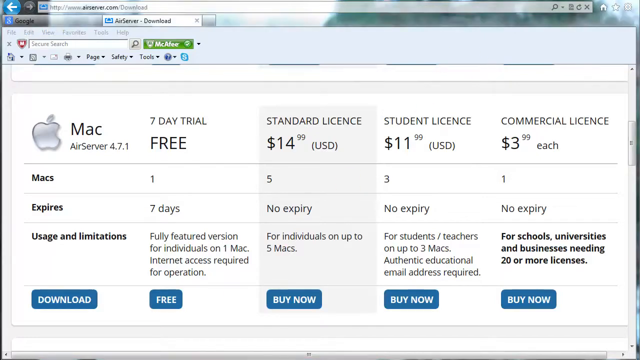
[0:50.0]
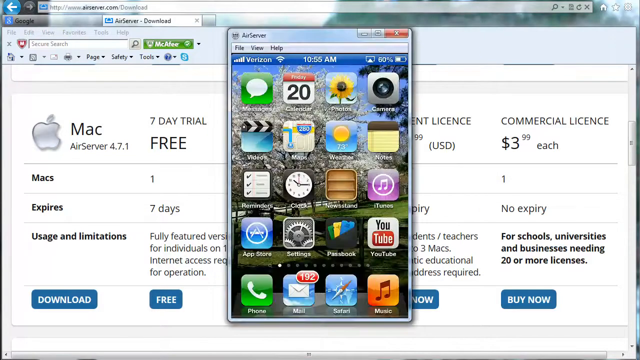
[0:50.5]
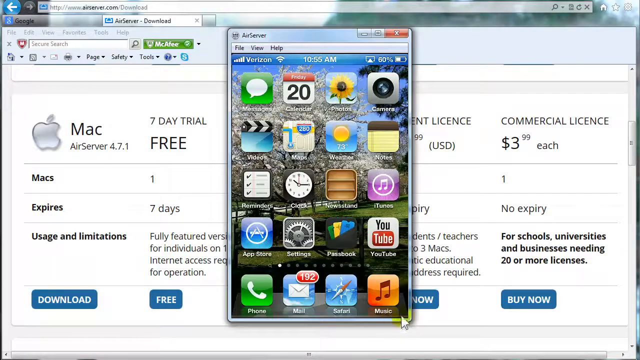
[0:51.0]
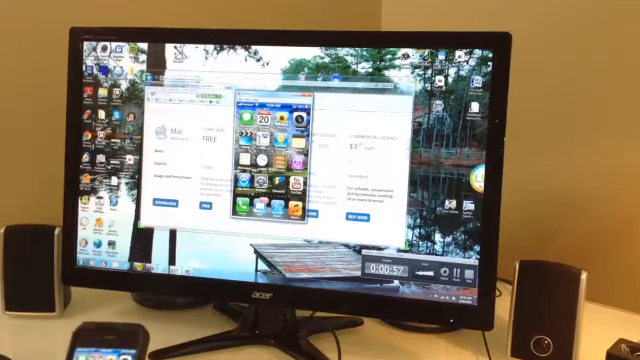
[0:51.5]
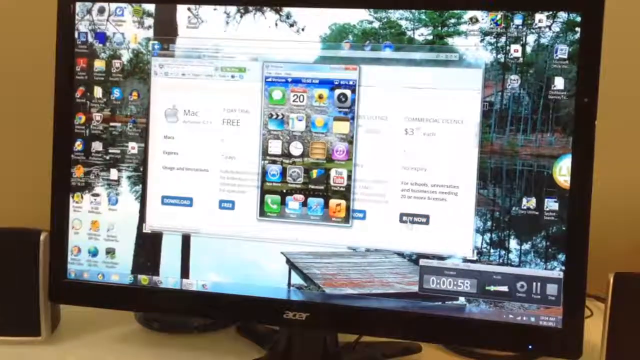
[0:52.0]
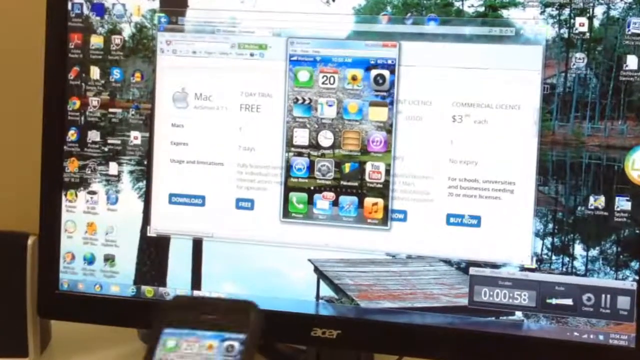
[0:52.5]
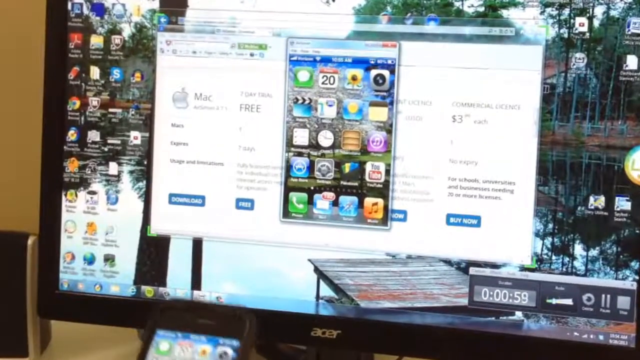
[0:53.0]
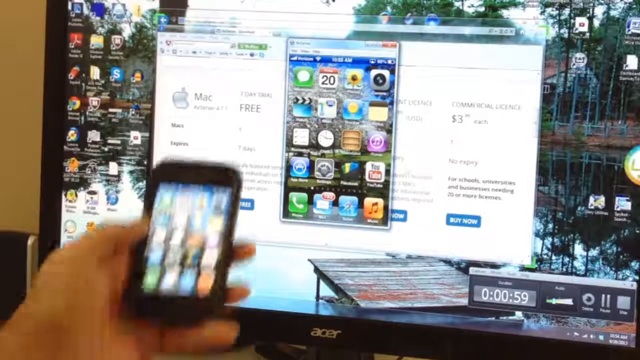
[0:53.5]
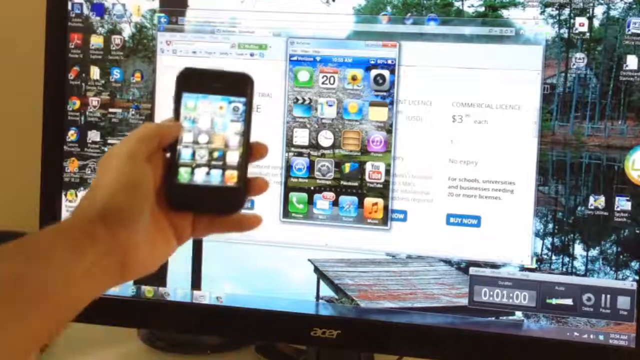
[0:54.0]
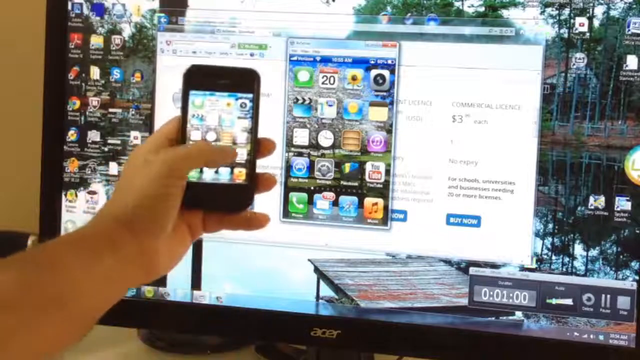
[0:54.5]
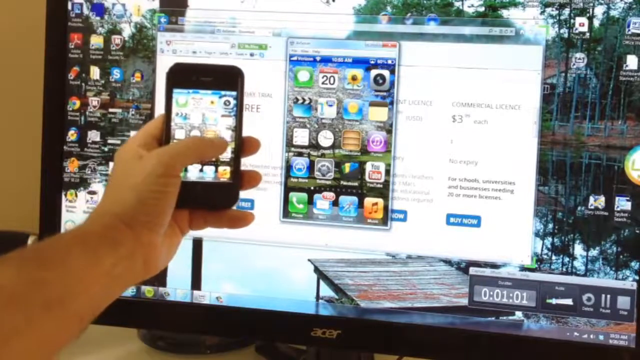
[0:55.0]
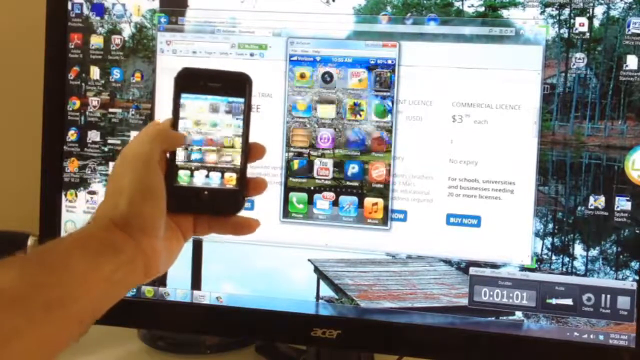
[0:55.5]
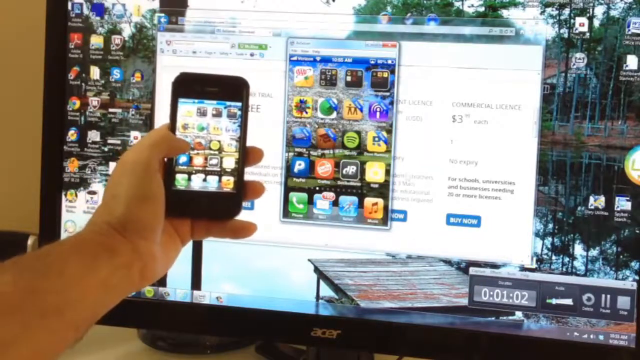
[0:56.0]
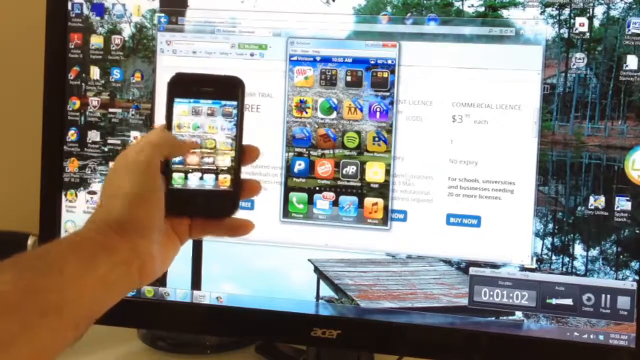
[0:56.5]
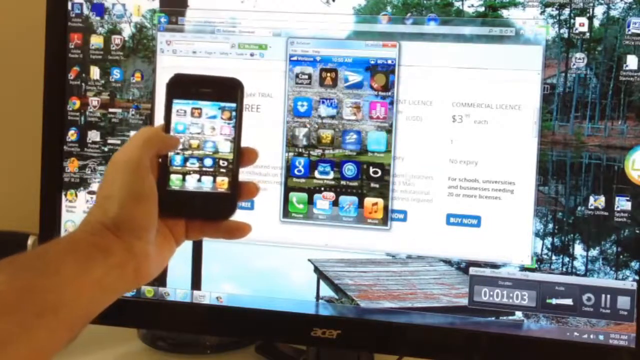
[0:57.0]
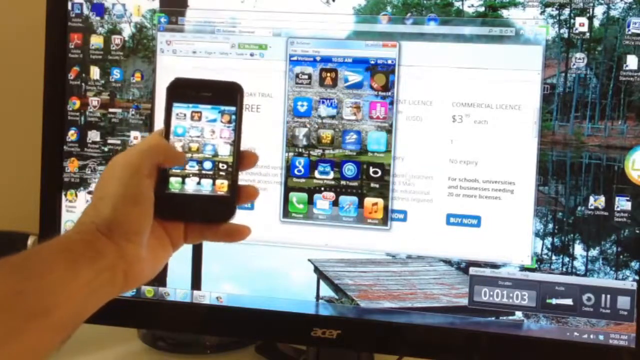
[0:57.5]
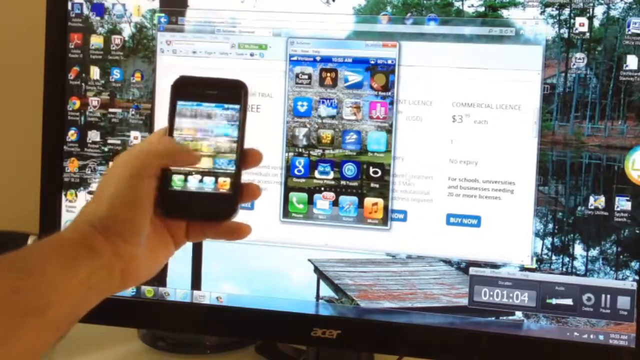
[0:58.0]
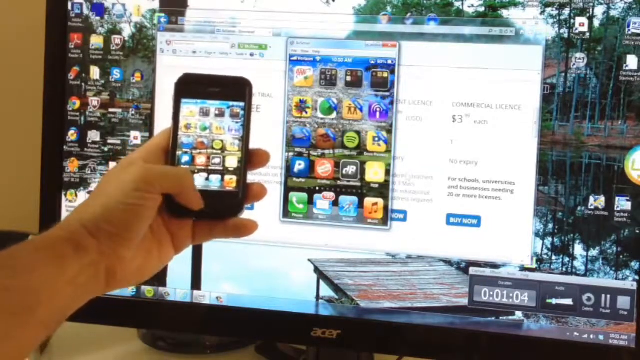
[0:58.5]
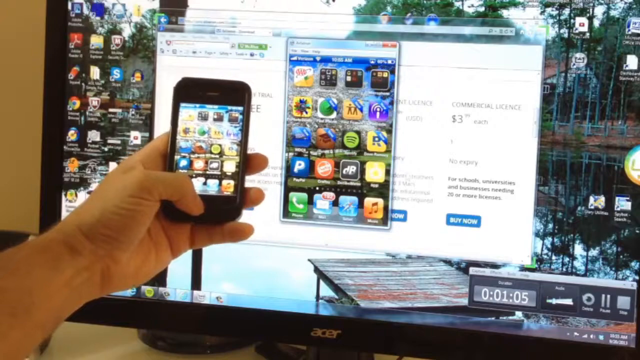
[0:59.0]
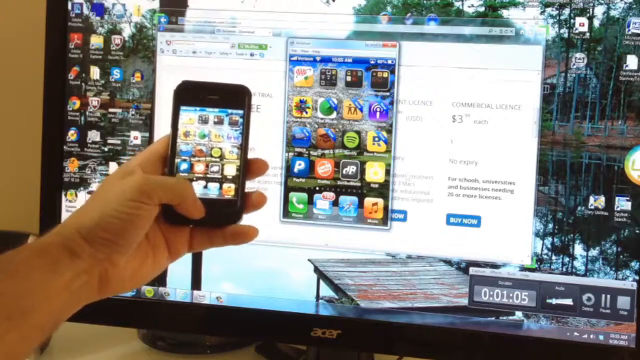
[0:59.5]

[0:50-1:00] In front of what looks like a website there is a computer-generated image of a cell phone with many icons on its screen. The video cuts to a laptop showing what seems to be the same screen in a wider shot, and the camera starts to zoom in. A person holds a real cell phone up to the screen with the icons, and his phone shows the identical icons. He seems to scroll with his thumb, grabs the screen and turns it to the left, and the screen changes on the cell phone and on the computer screen as well, so he seems to be able to control the computer screen with his thumb.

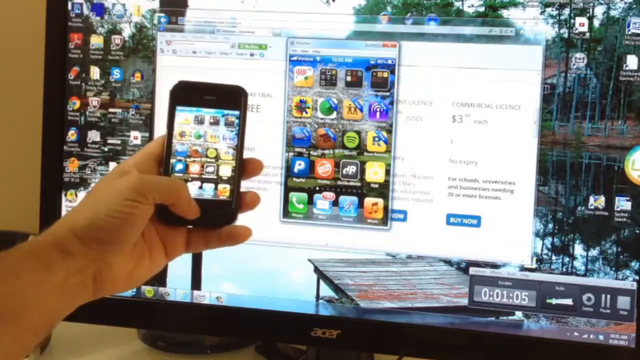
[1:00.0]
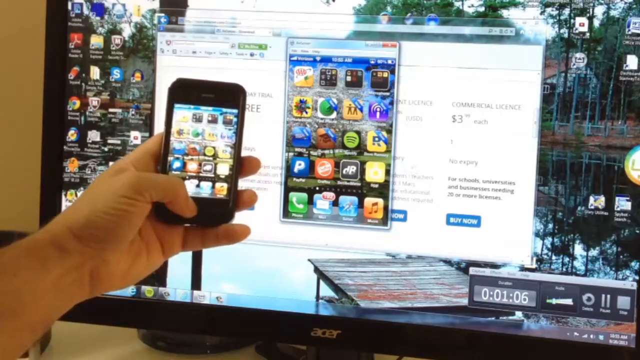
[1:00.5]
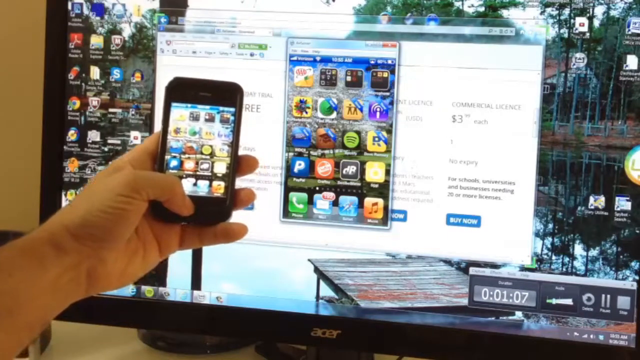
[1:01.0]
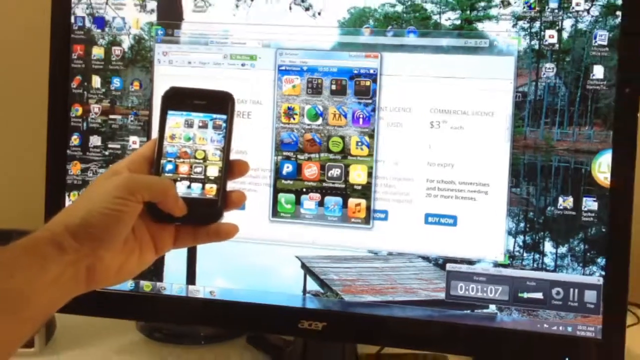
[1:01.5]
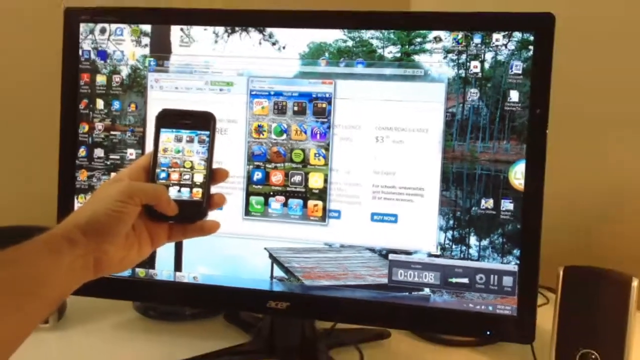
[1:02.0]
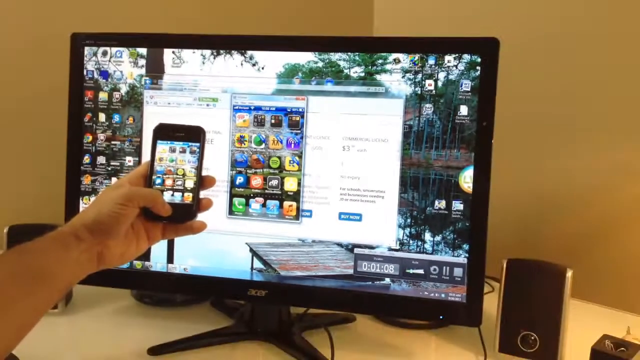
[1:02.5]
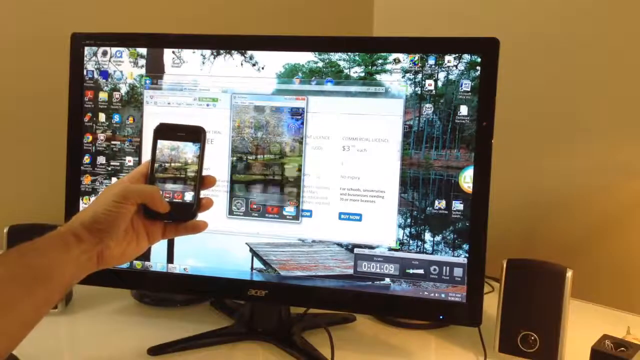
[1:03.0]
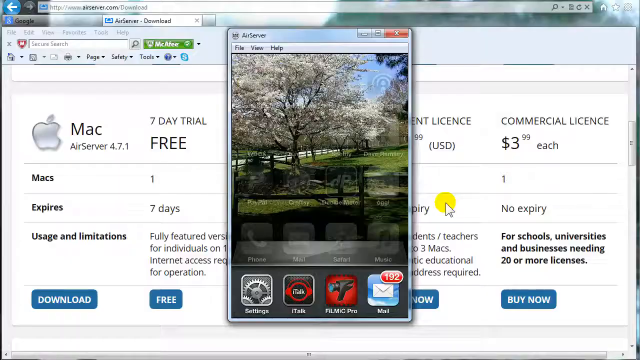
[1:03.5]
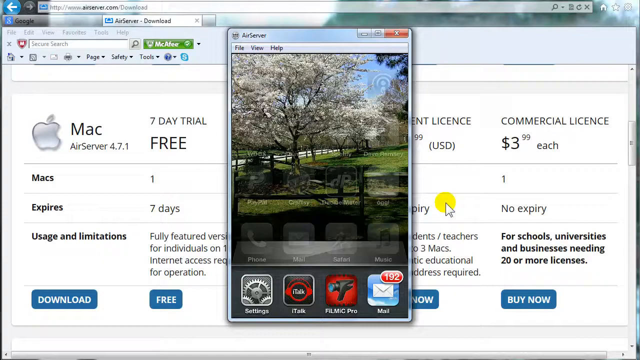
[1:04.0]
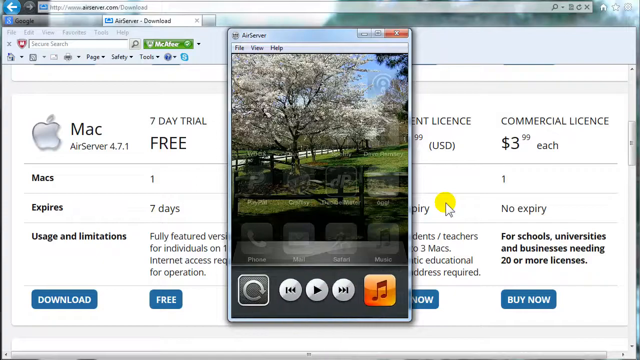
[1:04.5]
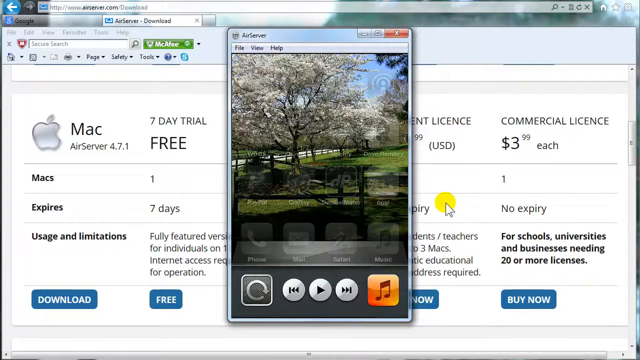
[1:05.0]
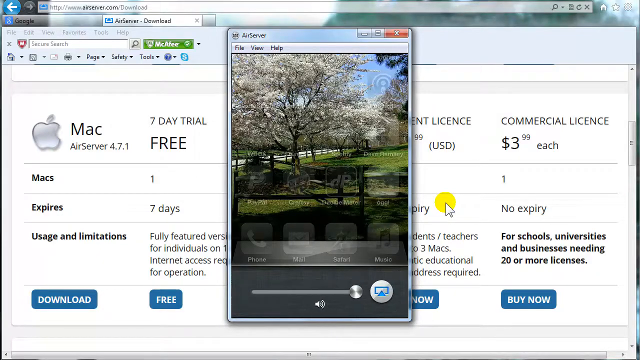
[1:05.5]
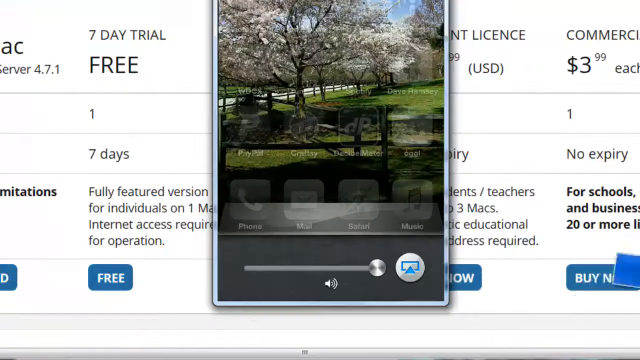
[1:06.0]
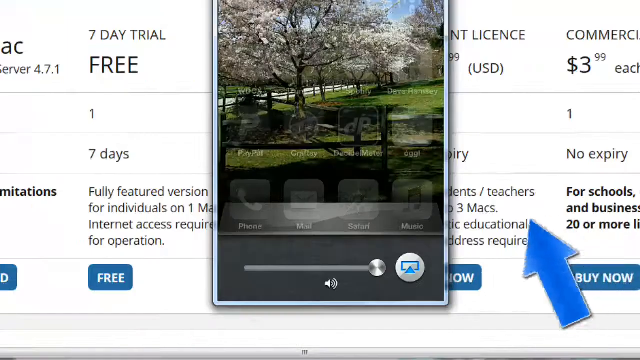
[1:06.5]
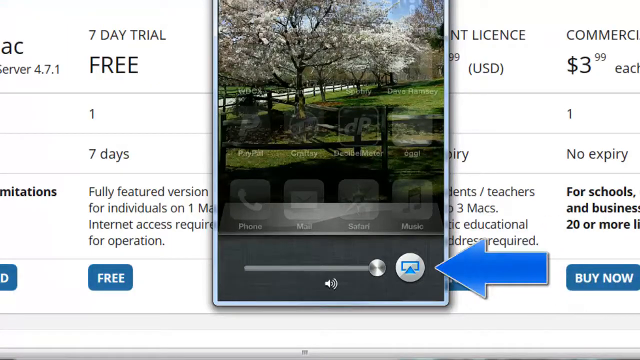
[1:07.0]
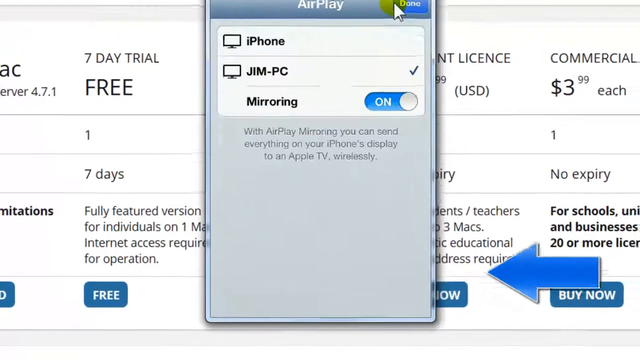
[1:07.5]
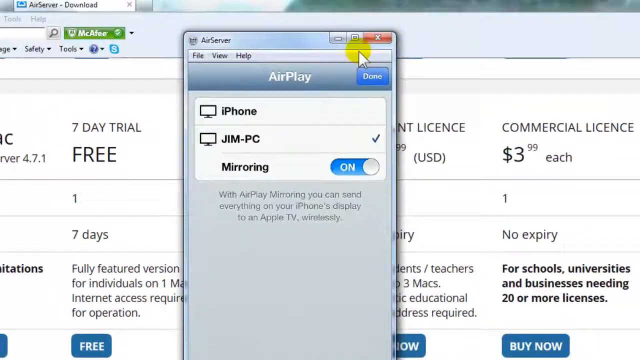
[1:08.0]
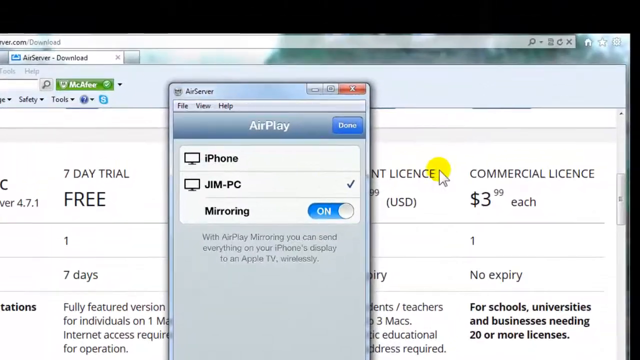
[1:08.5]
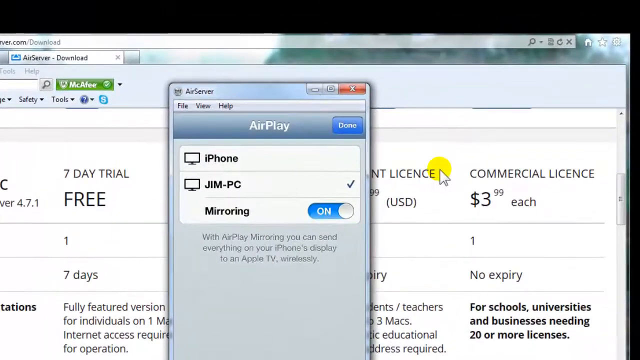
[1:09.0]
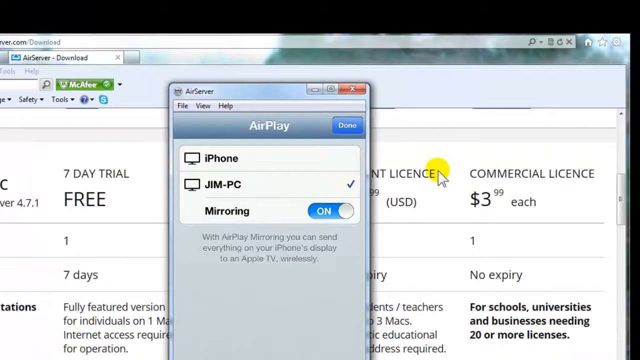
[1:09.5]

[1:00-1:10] A person holds up a cell phone in his left hand; only his hand is visible. The phone's screen shows many icons. Behind it is a big laptop or monitor showing a computer-generated version of what kind of looks like a cell phone screen, also with icons, with a web page behind it. The phone is held right next to the computer screen. He scrolls up with his thumb and a picture appears on his phone and also on the computer screen, so he seems able to control the laptop screen with his phone. The video then goes into a close-up of the computer screen.